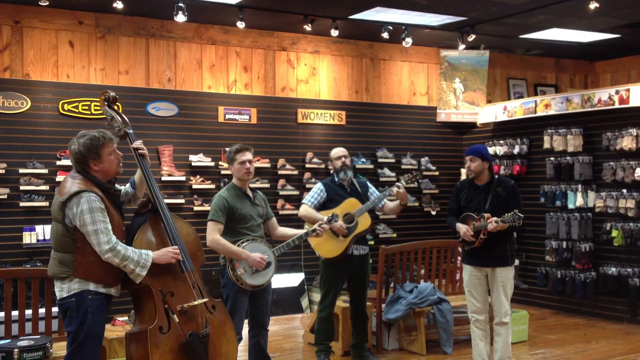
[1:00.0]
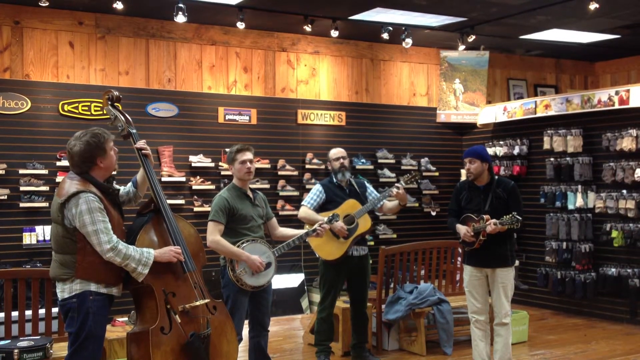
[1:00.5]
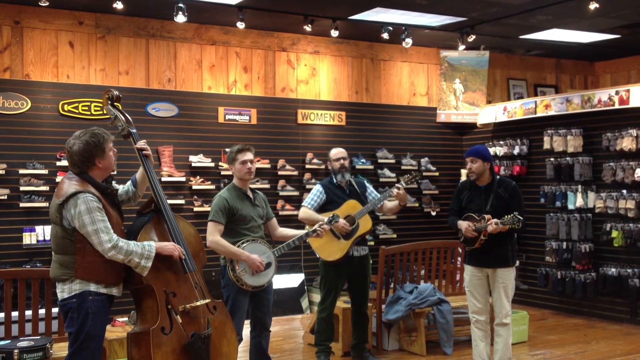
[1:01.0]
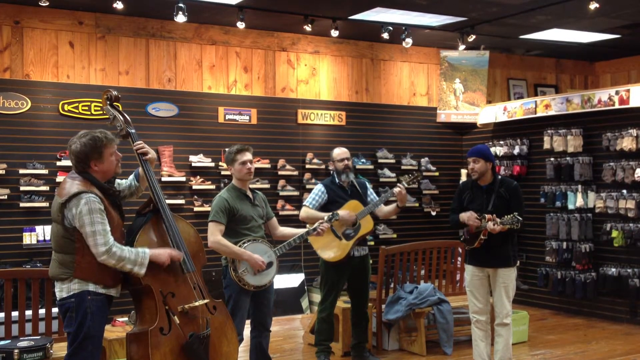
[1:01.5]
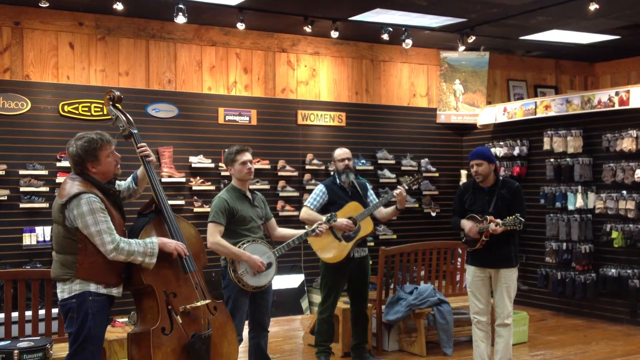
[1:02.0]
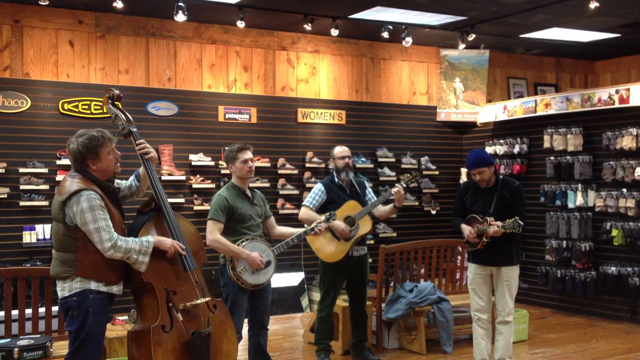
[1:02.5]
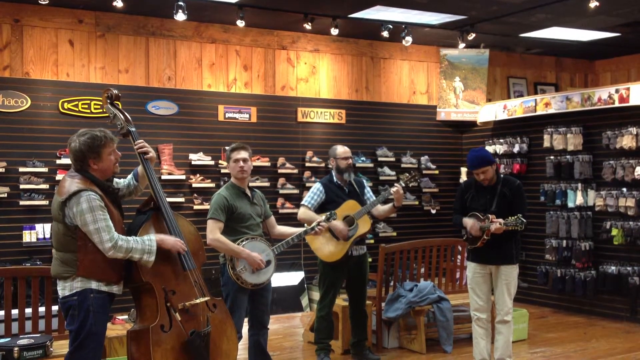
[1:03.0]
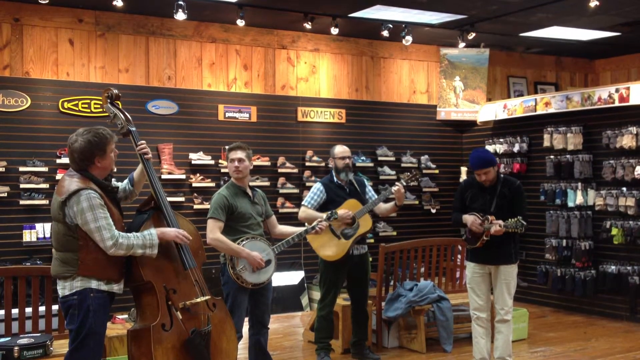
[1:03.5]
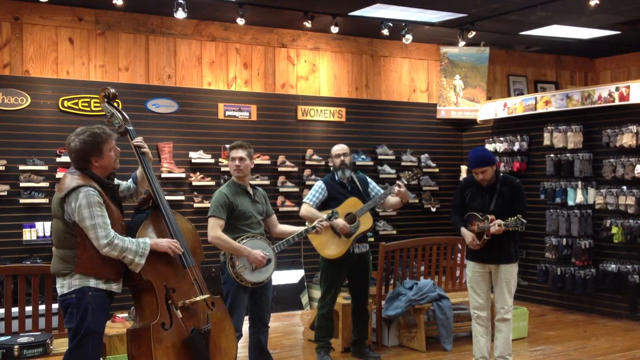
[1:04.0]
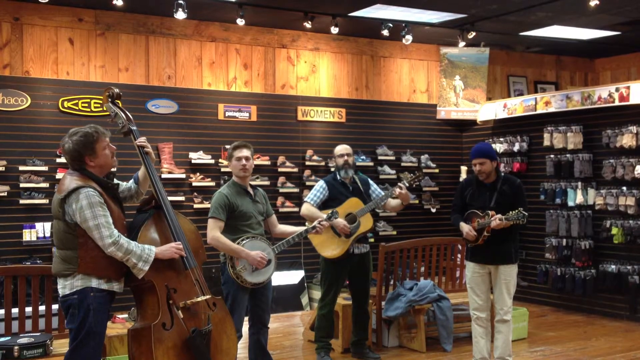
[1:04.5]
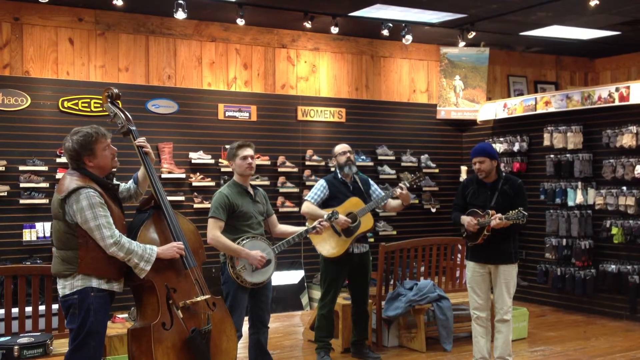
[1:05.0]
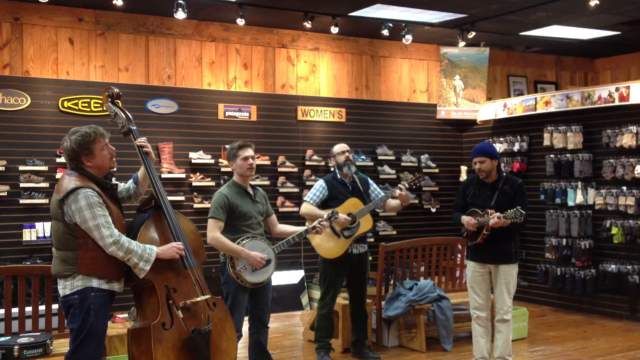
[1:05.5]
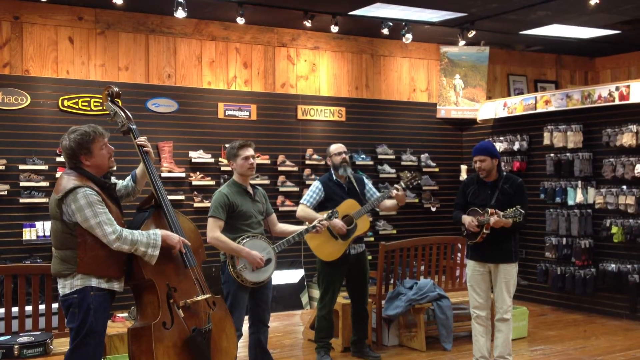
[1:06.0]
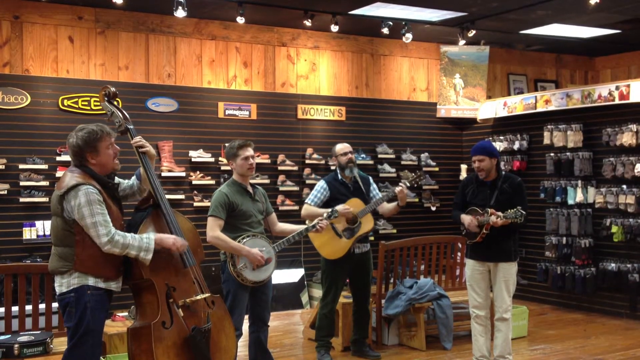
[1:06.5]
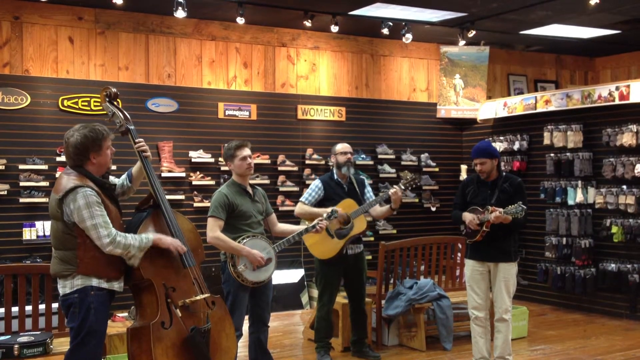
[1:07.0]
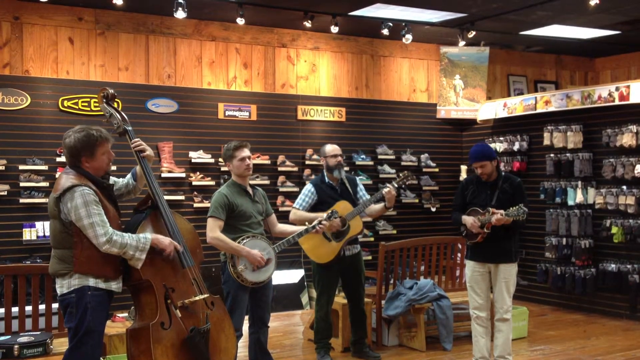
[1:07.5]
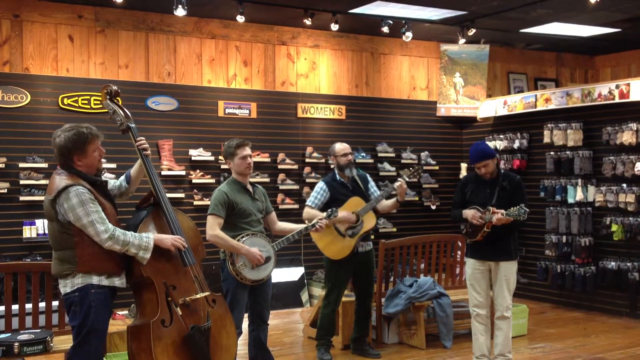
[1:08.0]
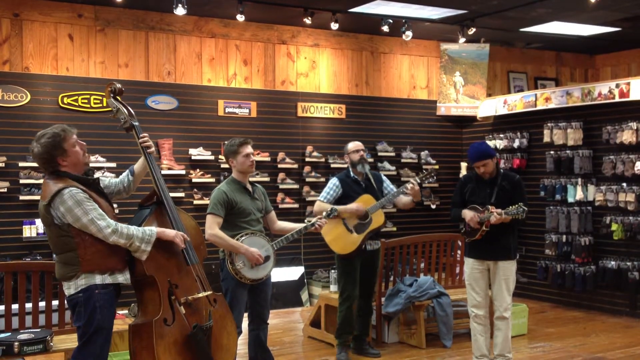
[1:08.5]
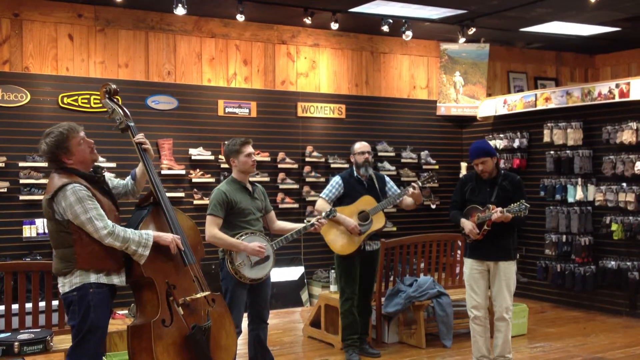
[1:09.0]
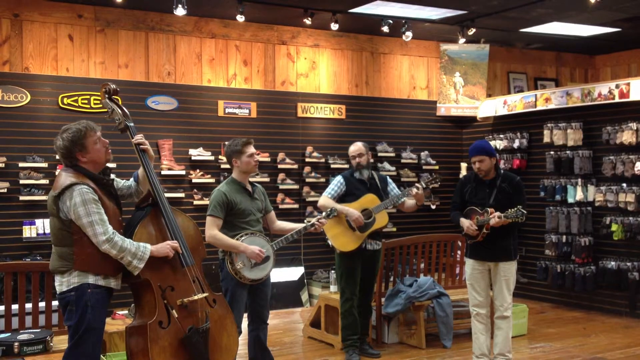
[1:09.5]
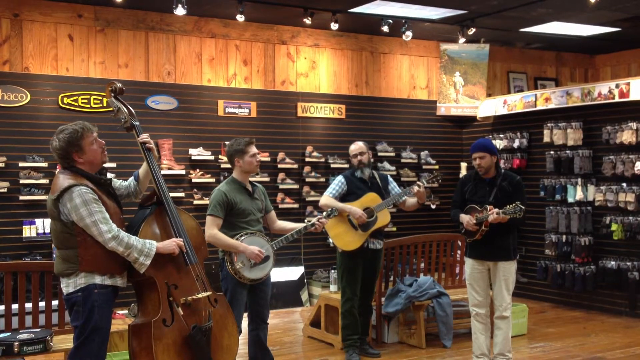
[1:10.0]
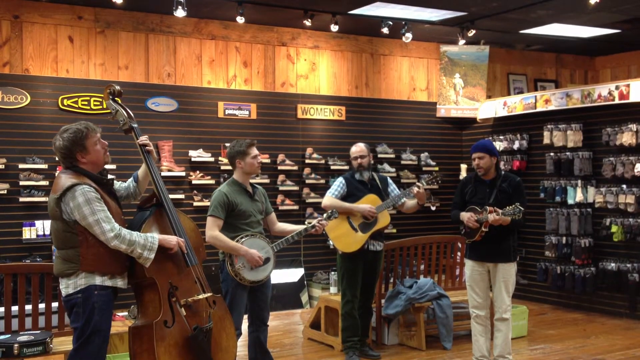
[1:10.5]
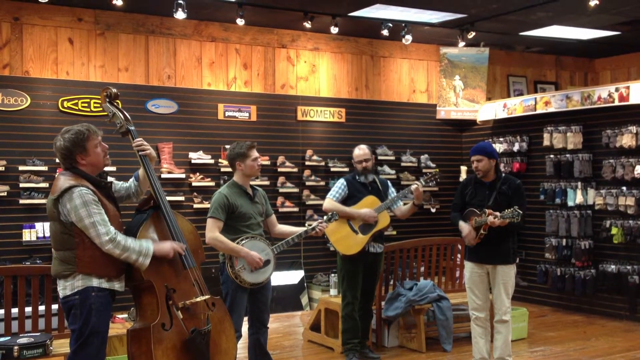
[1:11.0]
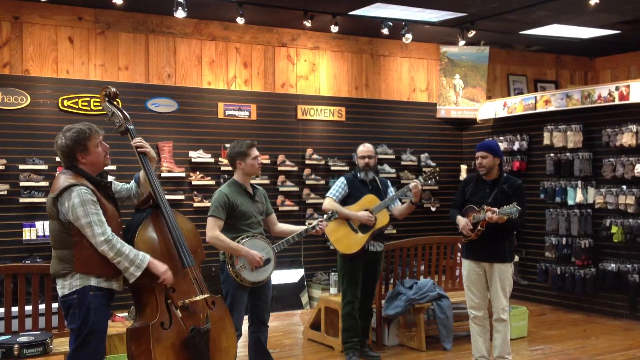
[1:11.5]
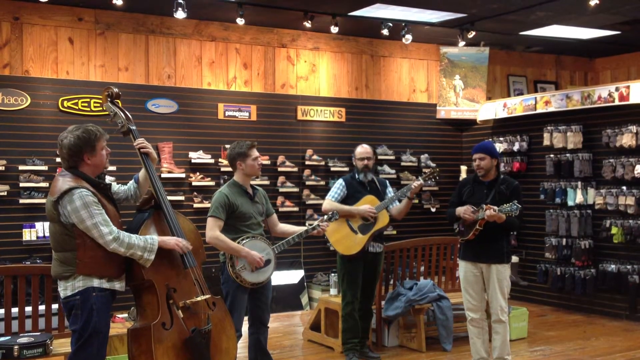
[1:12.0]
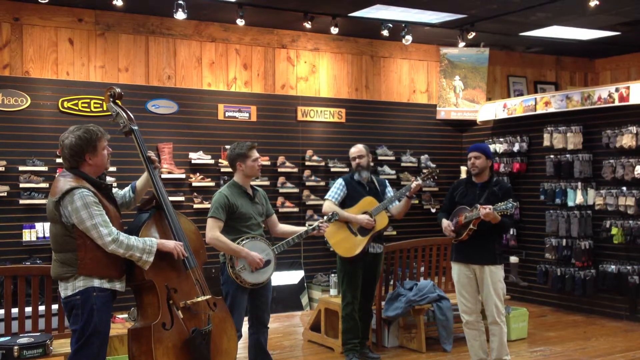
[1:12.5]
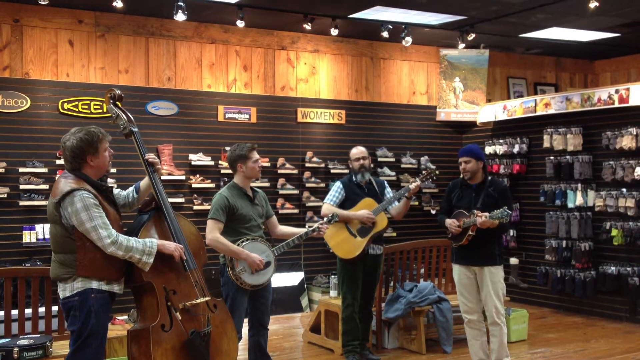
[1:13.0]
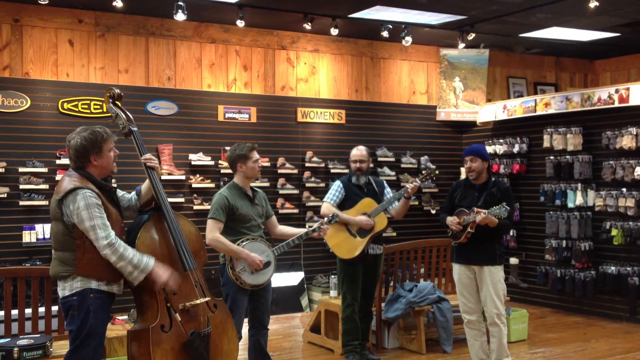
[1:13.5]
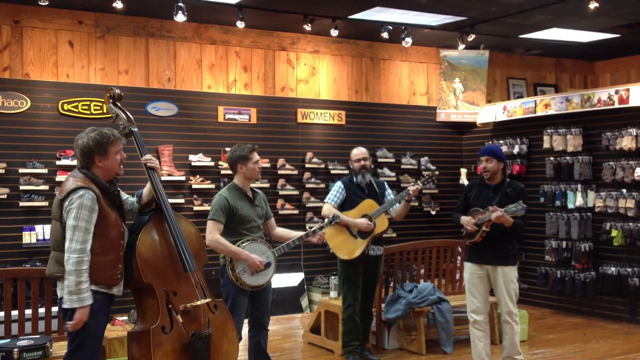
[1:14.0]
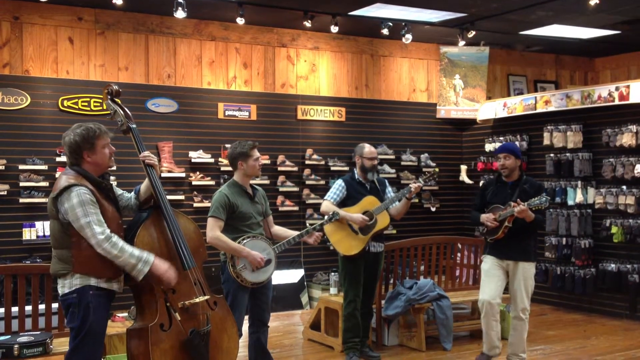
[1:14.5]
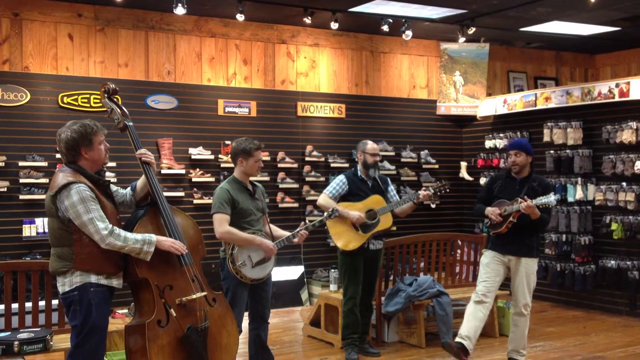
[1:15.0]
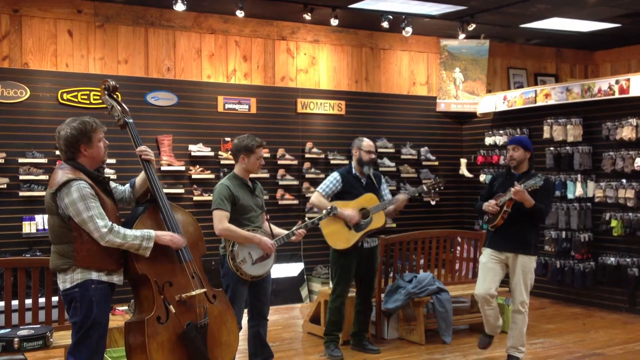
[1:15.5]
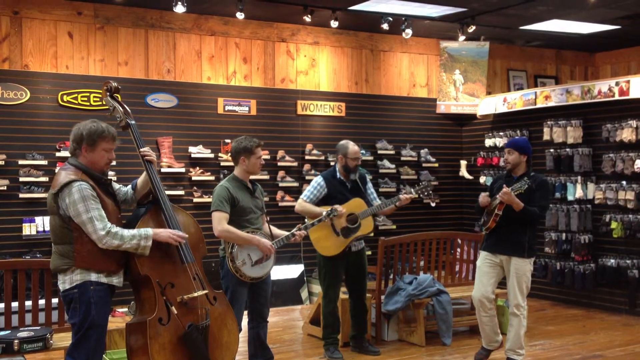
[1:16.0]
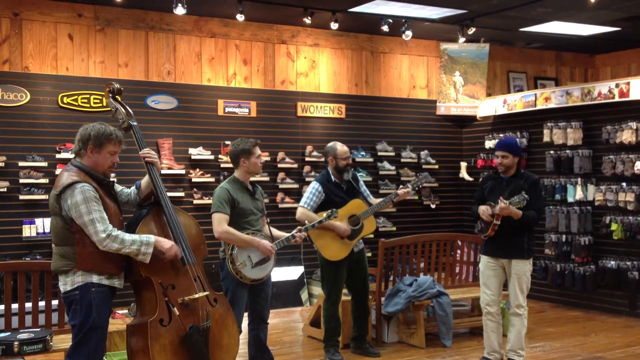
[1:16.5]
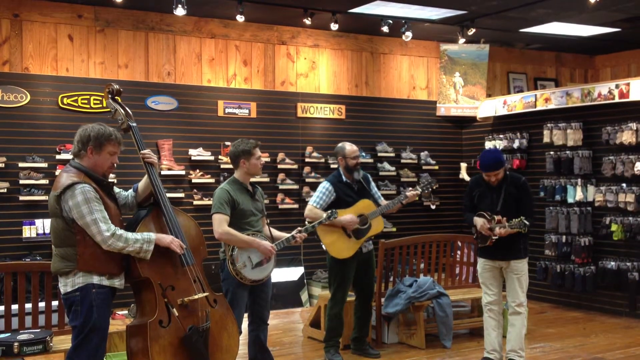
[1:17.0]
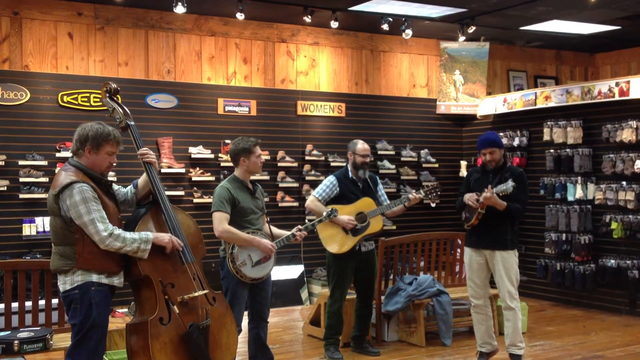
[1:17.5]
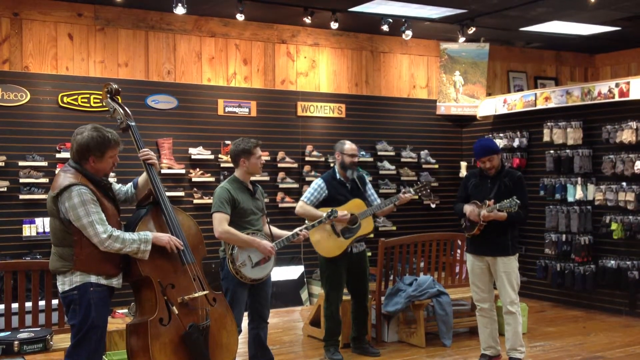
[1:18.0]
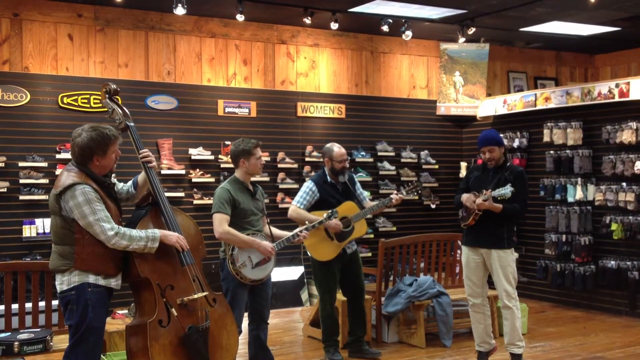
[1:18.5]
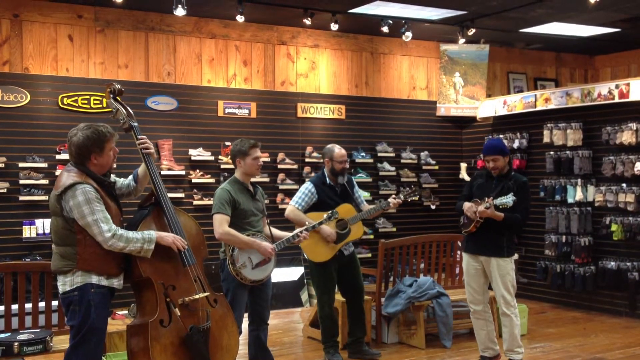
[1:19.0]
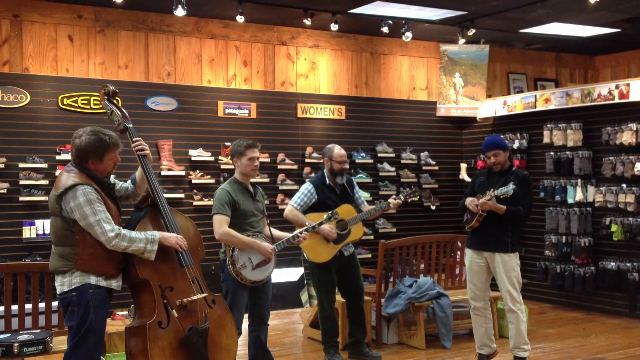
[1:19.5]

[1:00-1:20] The four men keep playing, and the cello player now sings along too, so three of them sing, not necessarily at the same time: one sings a few lines, then another comes in, then another, so the song apparently has different parts. The banjo player looks a little bored and seems preoccupied for a moment. The men smile and groove a little. The cello player seems amused by his own singing. The man with the mandolin gets into it for a moment, playing more aggressively. The banjo player looks around a little and looks over at the cello player. They are all very animated in their movements while playing.